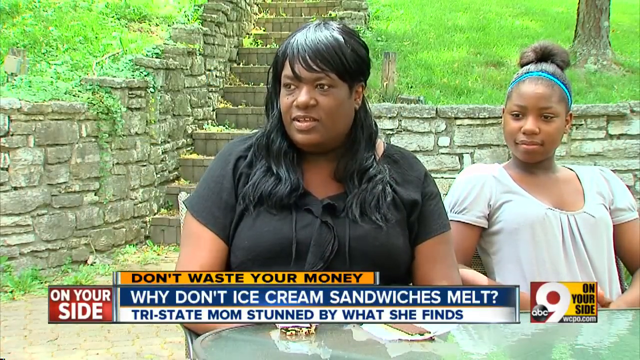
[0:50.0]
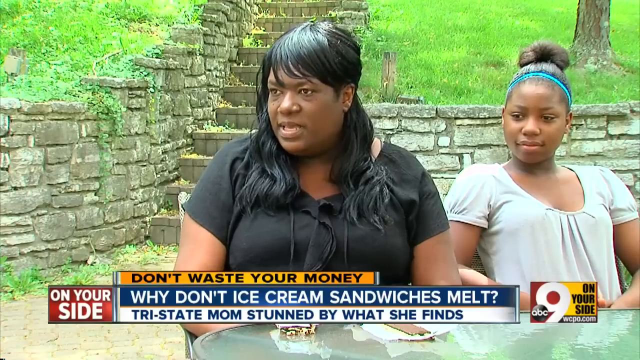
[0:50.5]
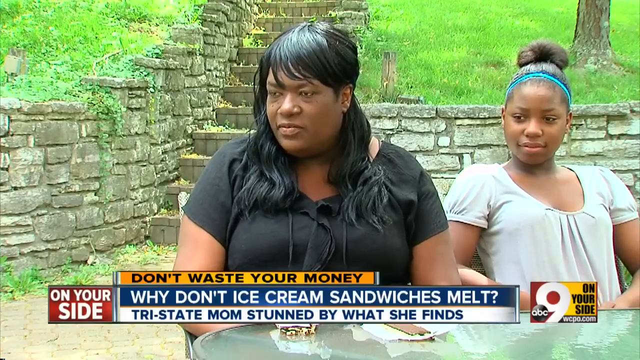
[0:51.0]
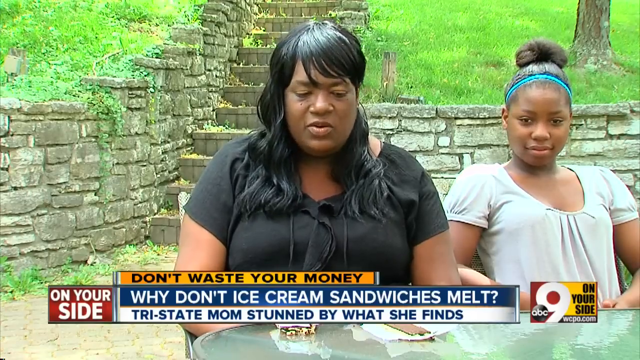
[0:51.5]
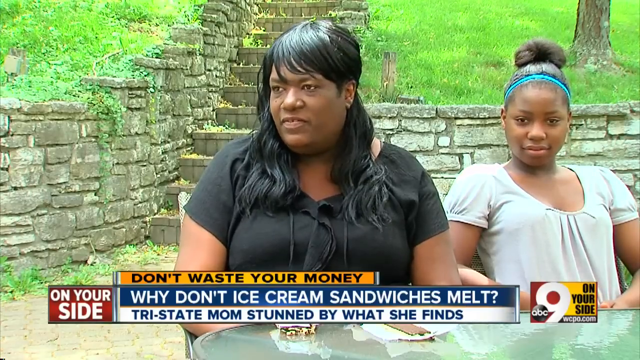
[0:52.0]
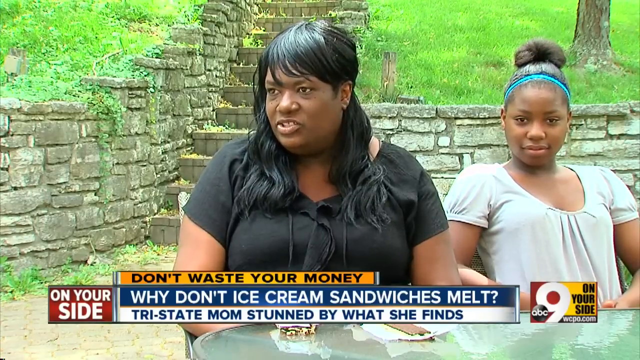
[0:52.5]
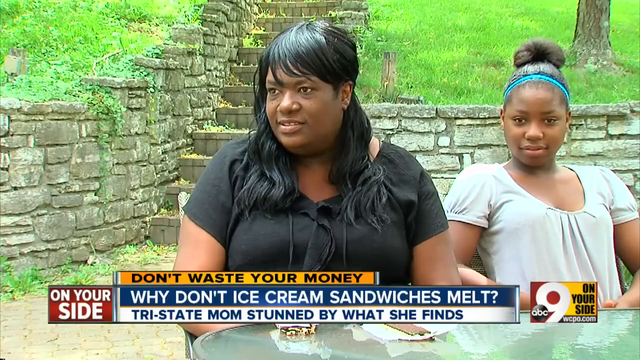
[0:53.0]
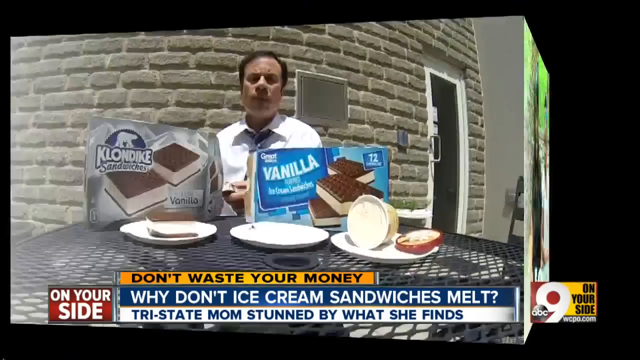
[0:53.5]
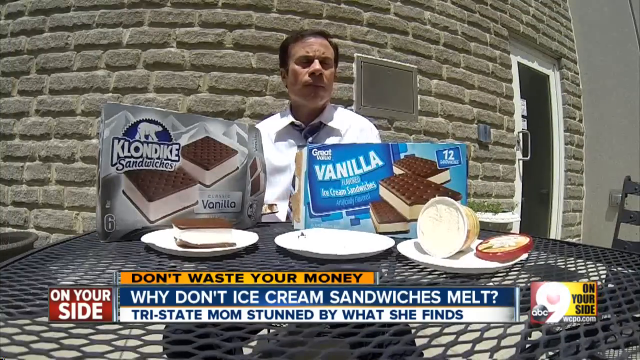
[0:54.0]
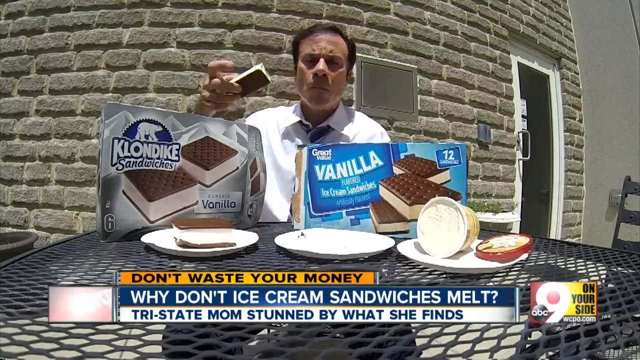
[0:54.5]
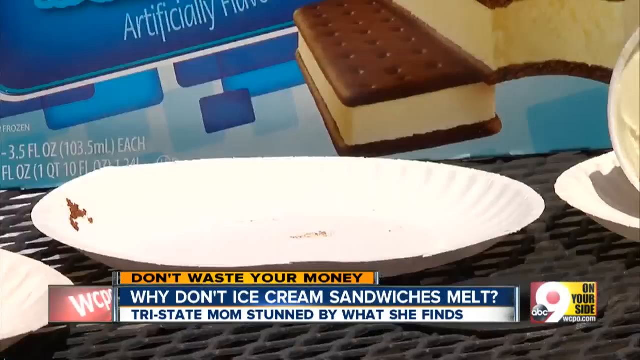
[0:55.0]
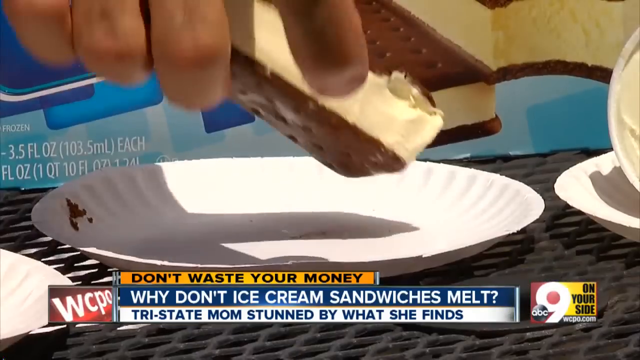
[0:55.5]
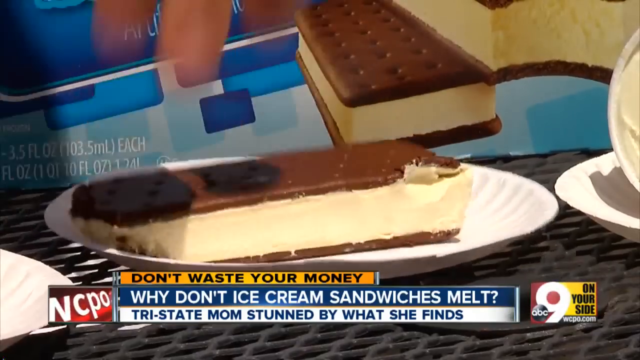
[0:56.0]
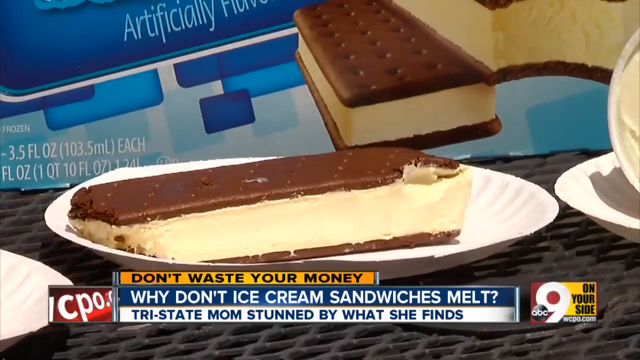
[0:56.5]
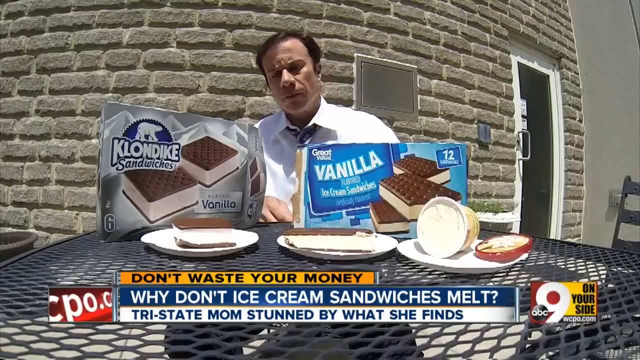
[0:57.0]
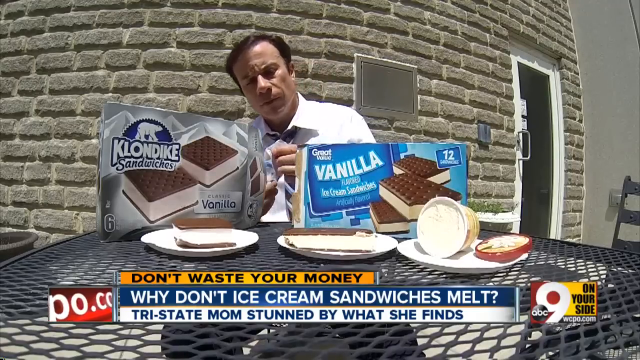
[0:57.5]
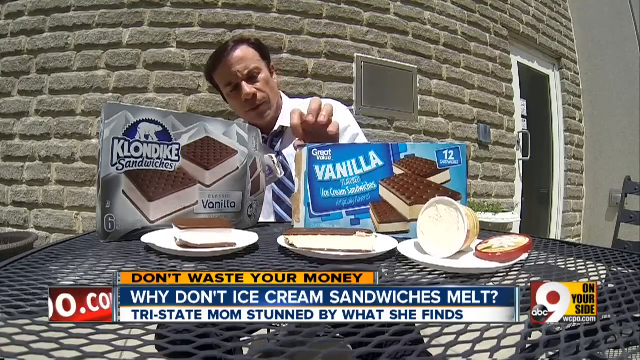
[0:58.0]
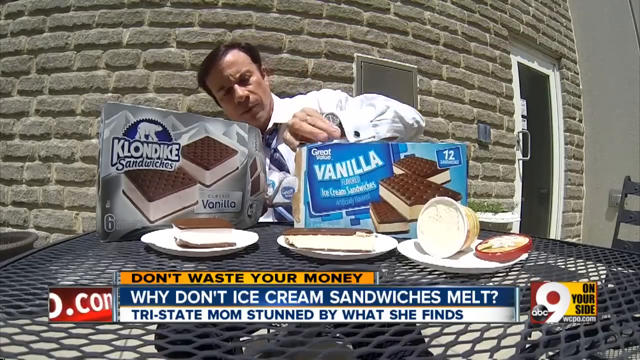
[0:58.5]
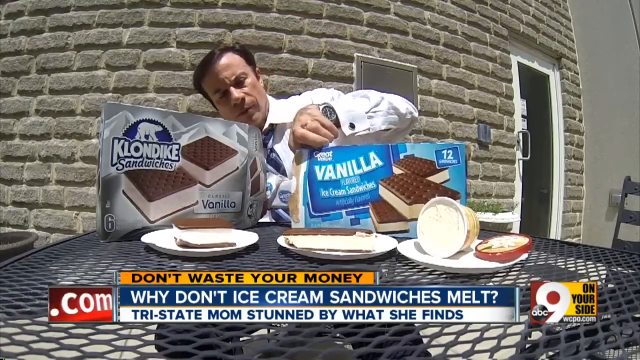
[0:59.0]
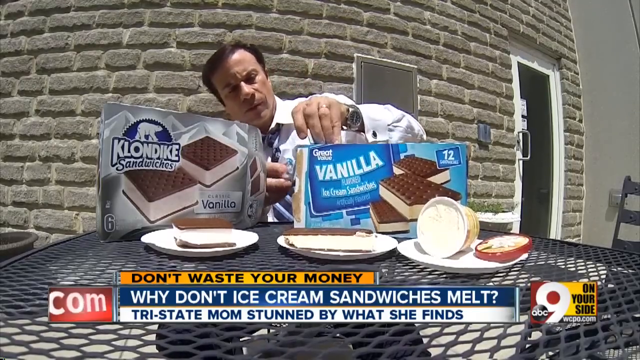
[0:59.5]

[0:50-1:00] An African American woman and an African American girl sit on a park bench against a grassy background, with a gray stone wall and gray stone stairs going up. The woman appears to be interviewed for a news program about ice cream sandwiches. Below them a graphic reads "Don't Waste Your Money. Why Don't Ice Cream Sandwiches Melt? The tri-state mom is stunned by what she finds." Two smaller graphics flank it: "wcpo.com" on the left and "abc9" on the right. The video then cuts to a Caucasian man sitting at an outdoor picnic table with two boxes of ice cream sandwiches: a box of Klondike bars on his left and a box of what looks like generic ice cream sandwiches on his right. He takes an ice cream sandwich out of the generic box and puts it on a paper plate in front of him, apparently to test whether they melt.